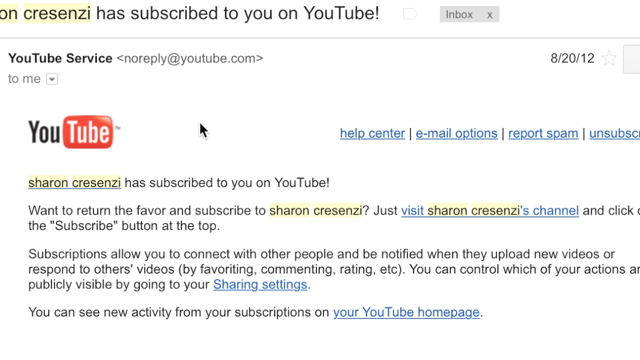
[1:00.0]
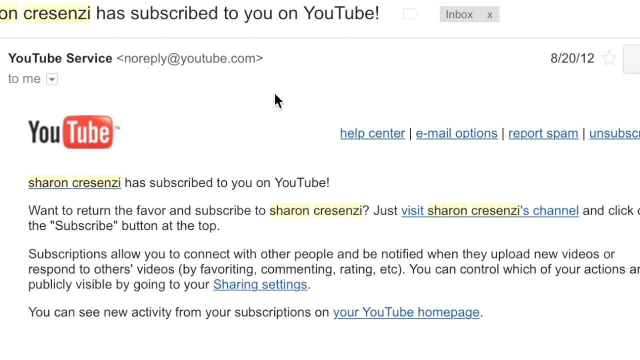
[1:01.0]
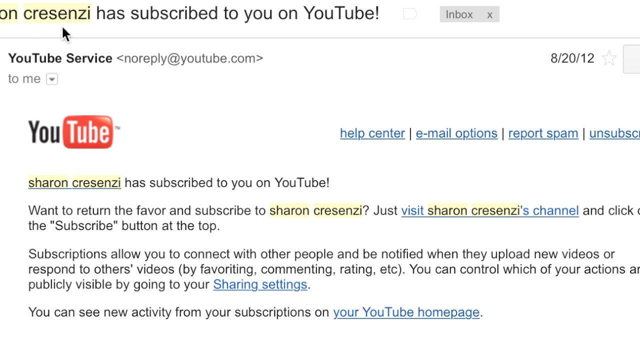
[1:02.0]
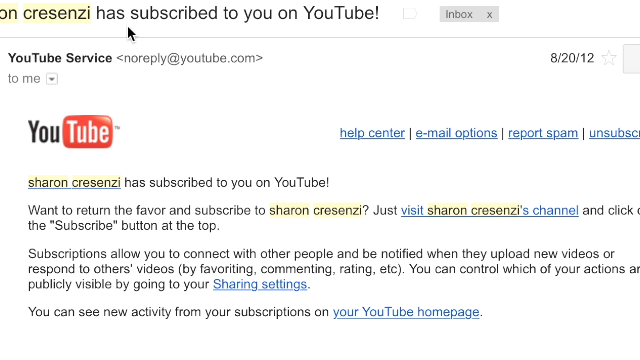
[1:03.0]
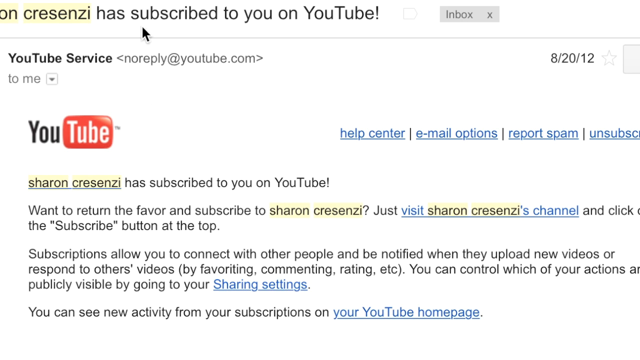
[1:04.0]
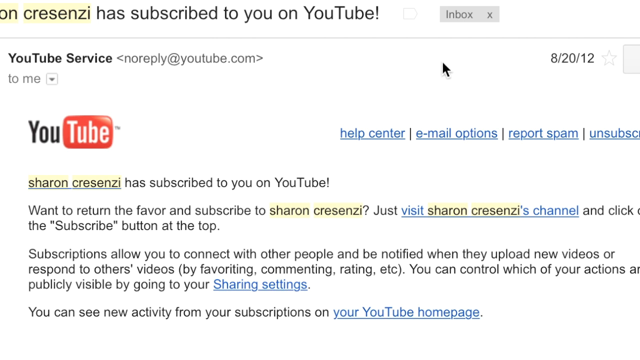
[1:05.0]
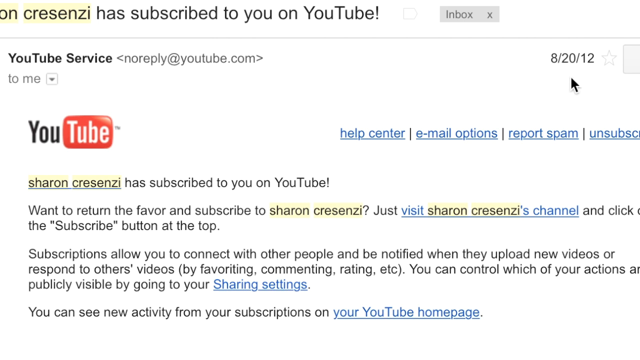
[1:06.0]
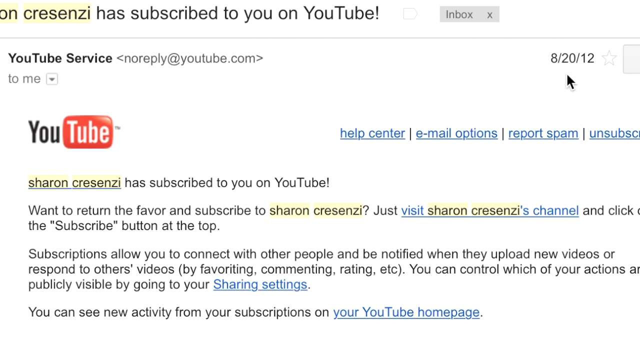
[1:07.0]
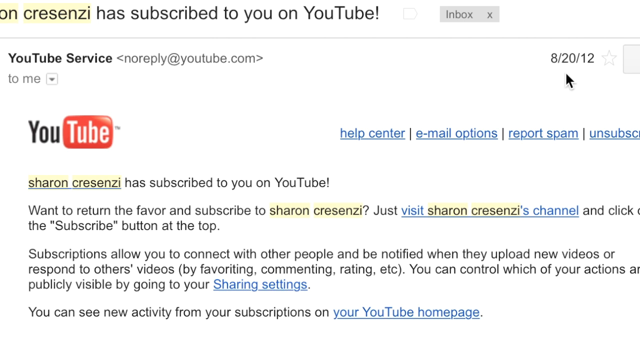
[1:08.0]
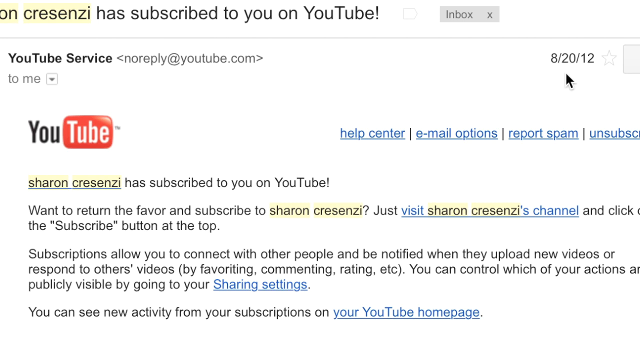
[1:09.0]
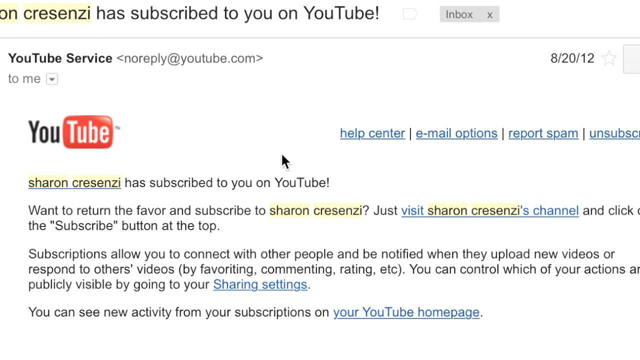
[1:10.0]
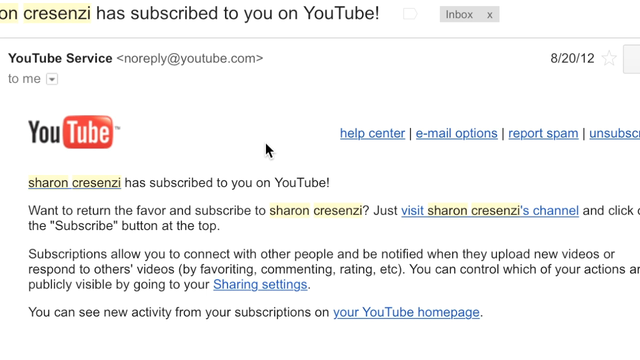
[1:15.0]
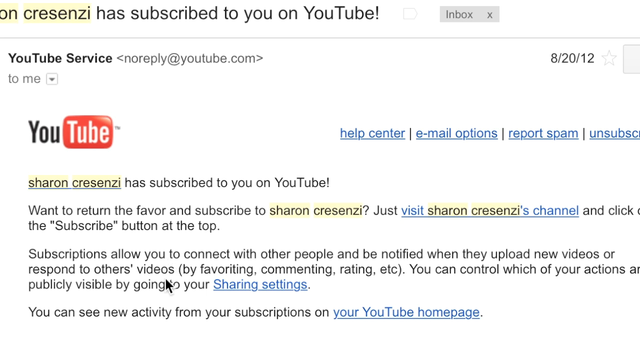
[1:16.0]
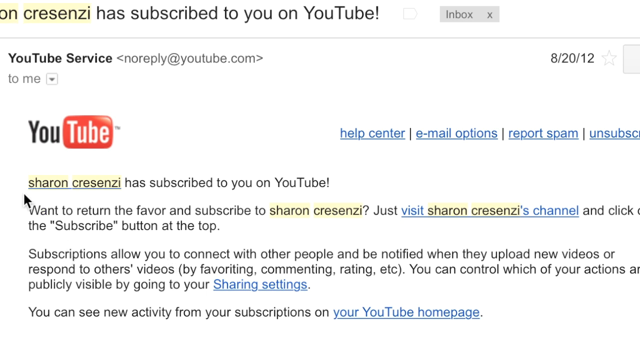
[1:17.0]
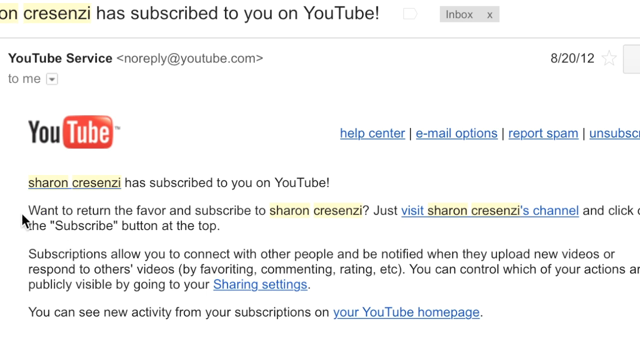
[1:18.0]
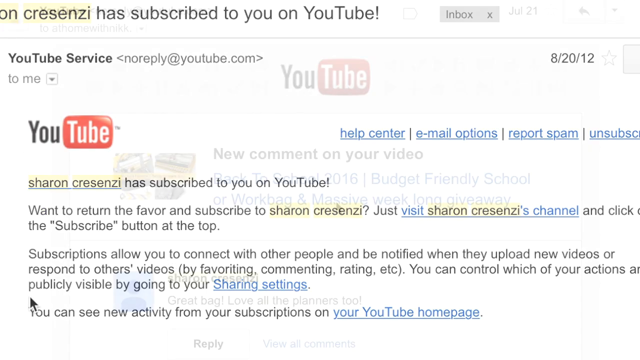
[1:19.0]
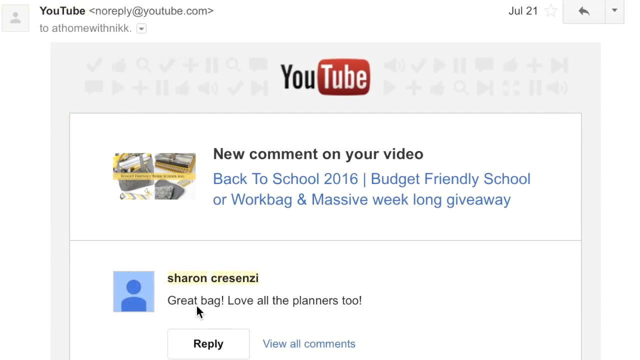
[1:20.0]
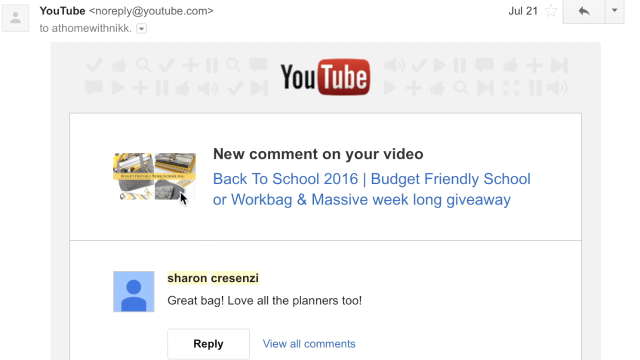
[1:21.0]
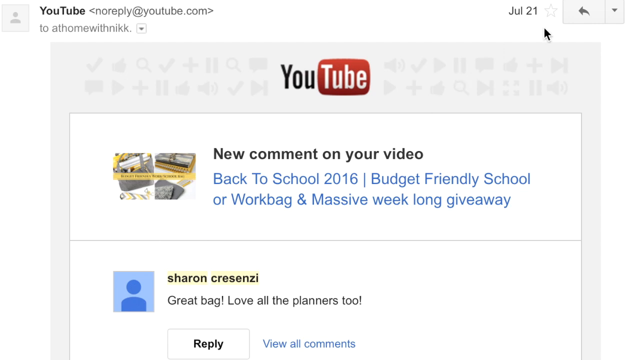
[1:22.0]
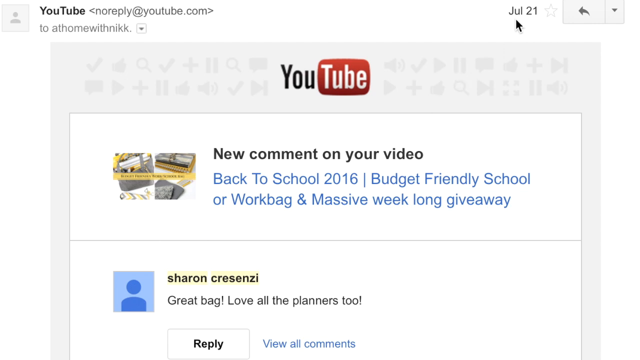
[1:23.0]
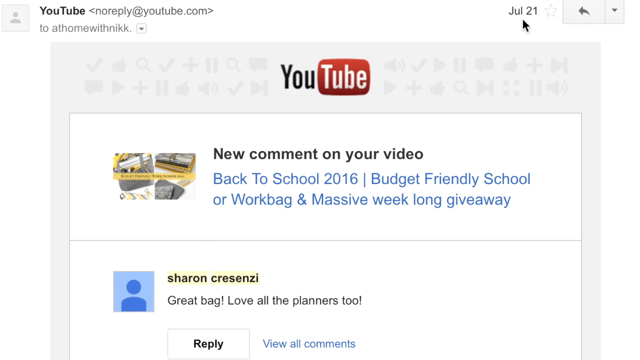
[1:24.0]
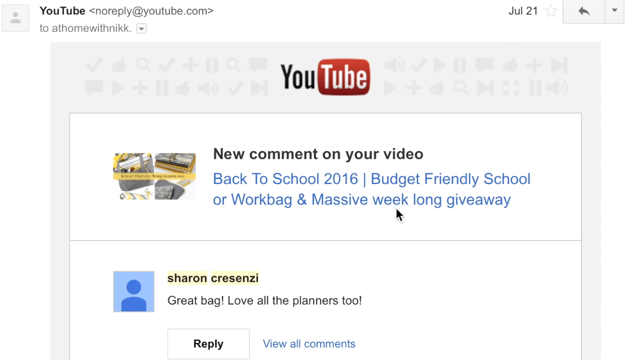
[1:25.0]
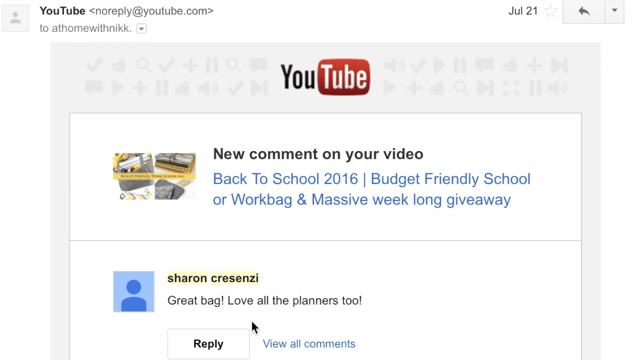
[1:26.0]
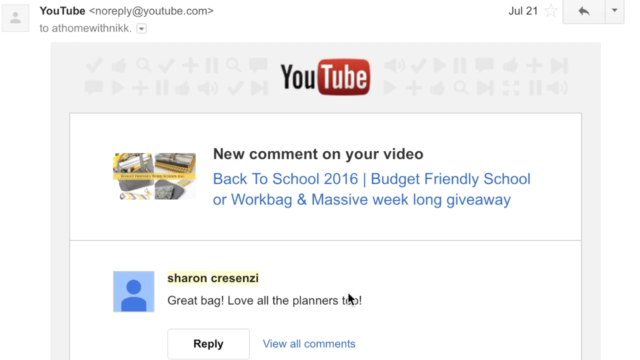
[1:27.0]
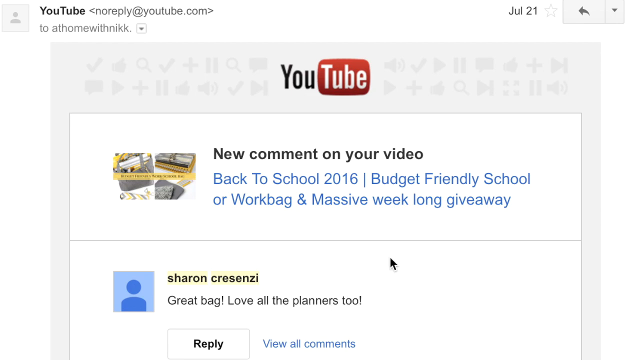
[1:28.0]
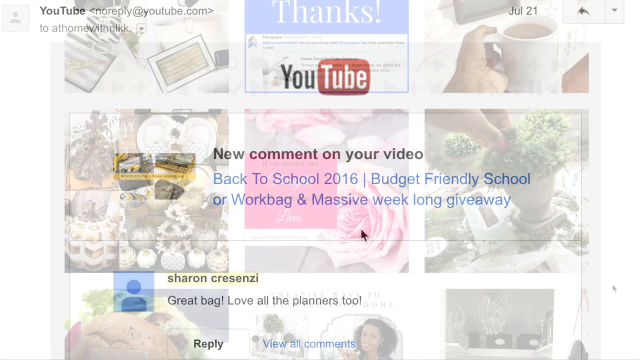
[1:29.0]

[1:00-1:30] A YouTube page shows the winner, Sharon Krasiny, with options about subscribing, including text reading "i want to return the favor and subscribe to Sharon just visit her channel and click the subscribe button" and "subscriptions allow you to connect with other people and be notified when they upload new videos". Next comes a YouTube notification of a "new comment on your video" on "back to school 2016 budget friendly school work bag and massive week": Sharon Krasinsy has replied "great bag love all the planners too", dated July 21st. Something from the person who created the original video then floats by for a moment.